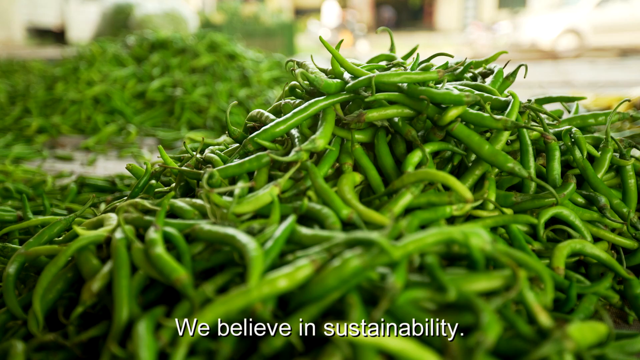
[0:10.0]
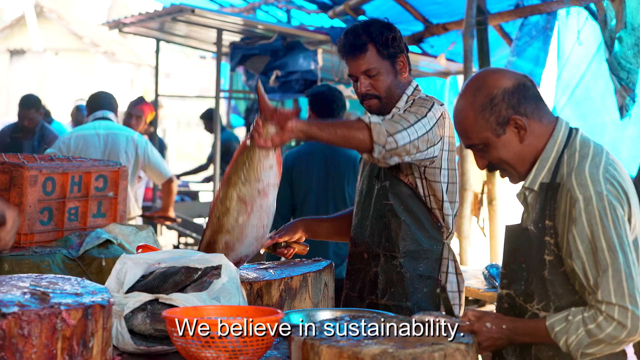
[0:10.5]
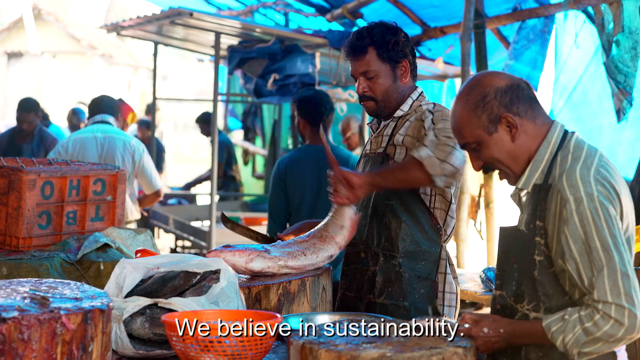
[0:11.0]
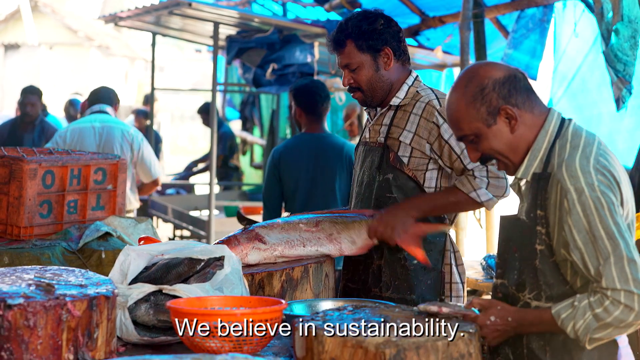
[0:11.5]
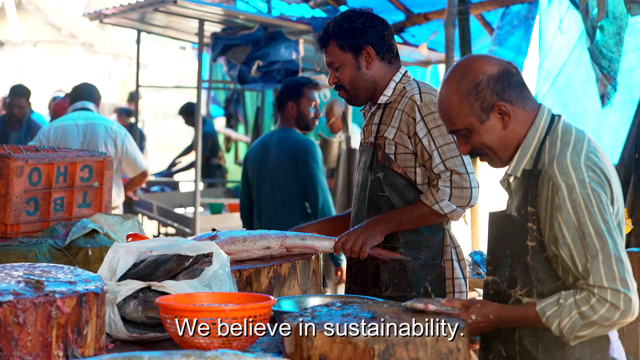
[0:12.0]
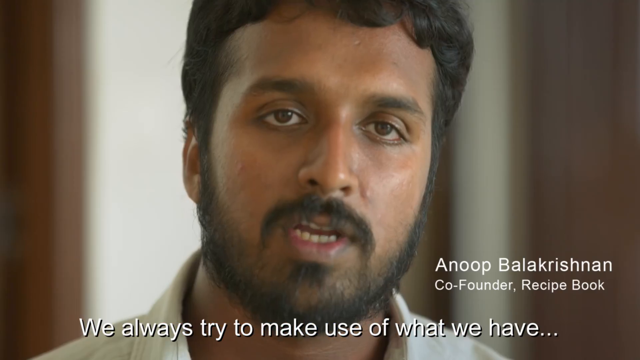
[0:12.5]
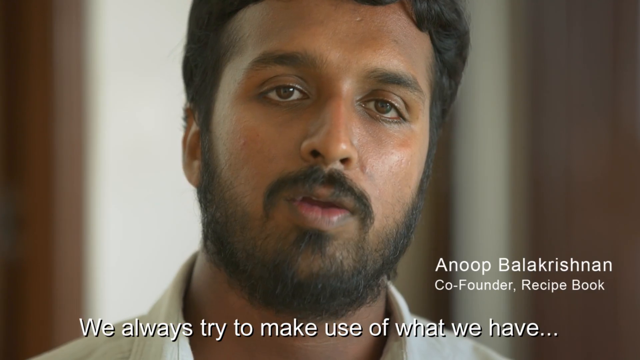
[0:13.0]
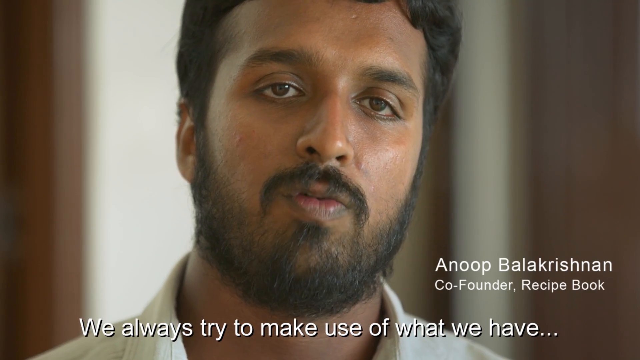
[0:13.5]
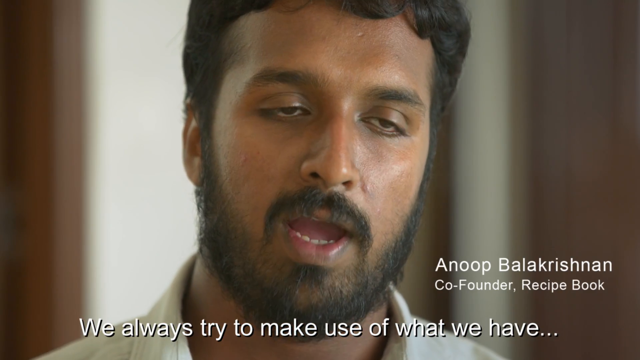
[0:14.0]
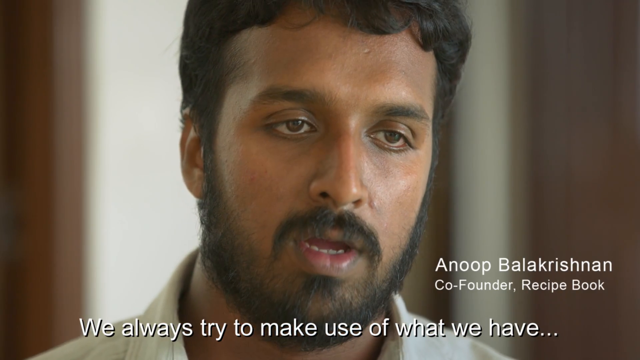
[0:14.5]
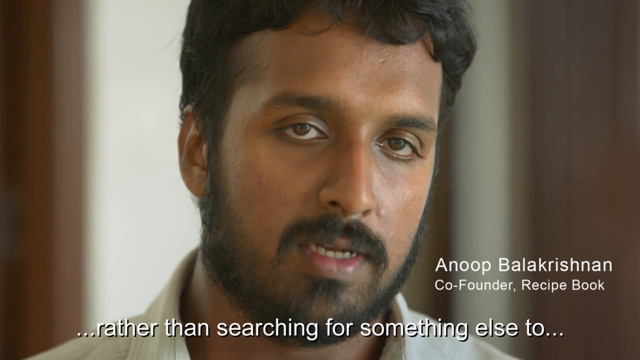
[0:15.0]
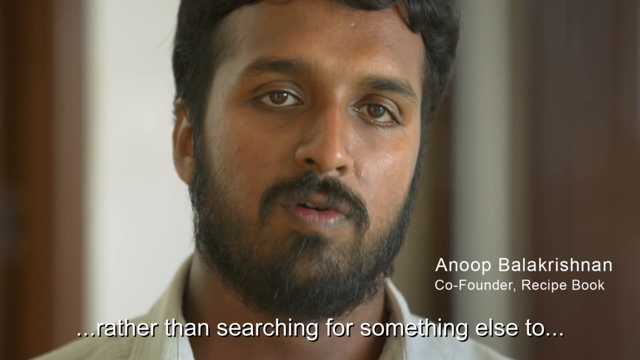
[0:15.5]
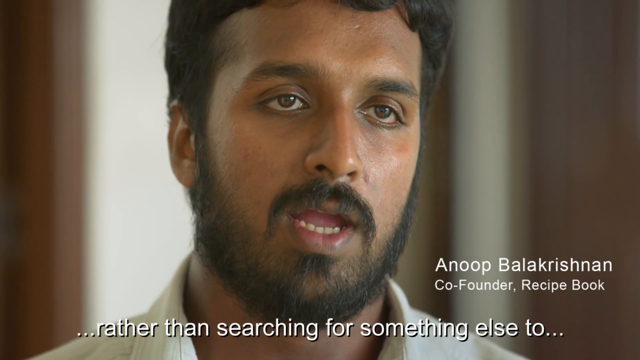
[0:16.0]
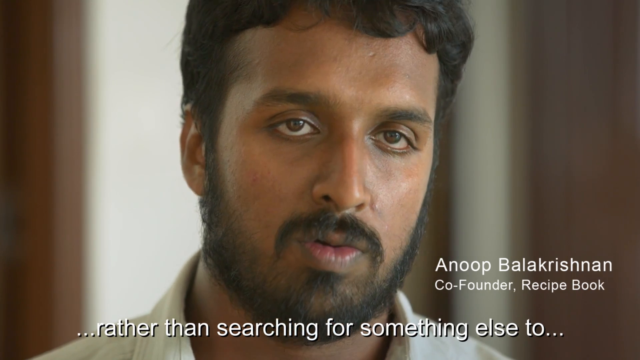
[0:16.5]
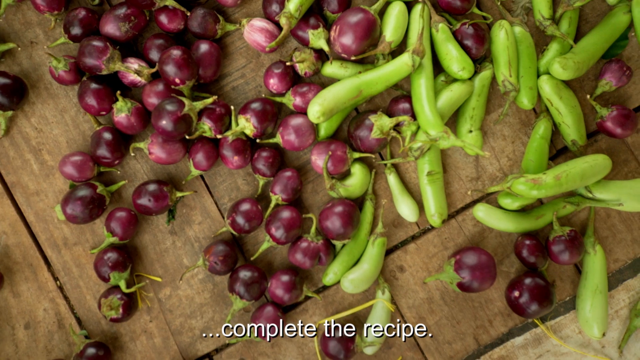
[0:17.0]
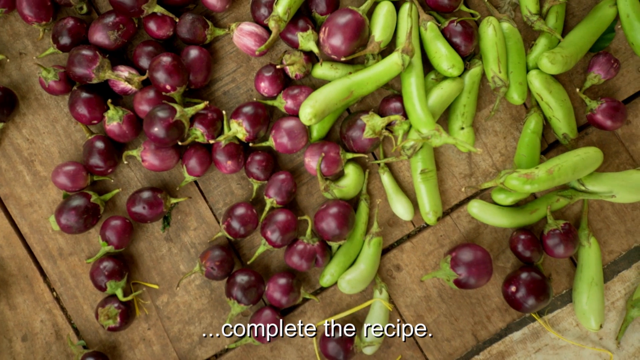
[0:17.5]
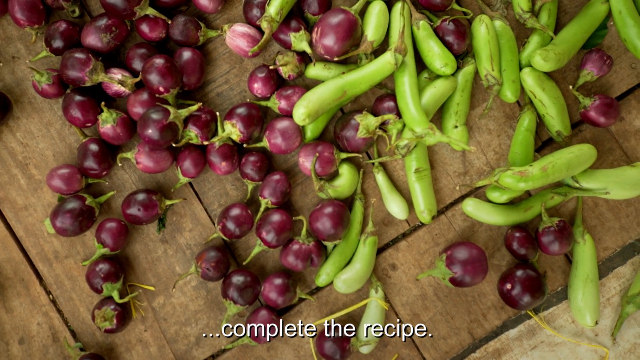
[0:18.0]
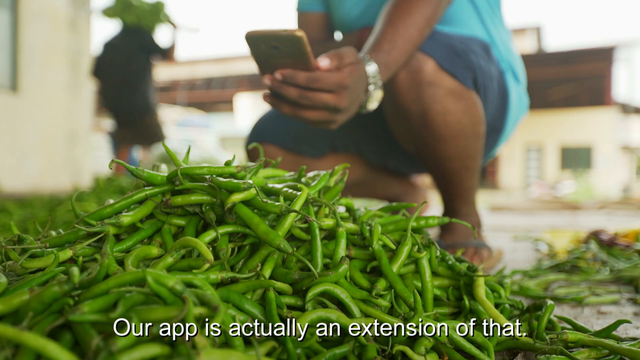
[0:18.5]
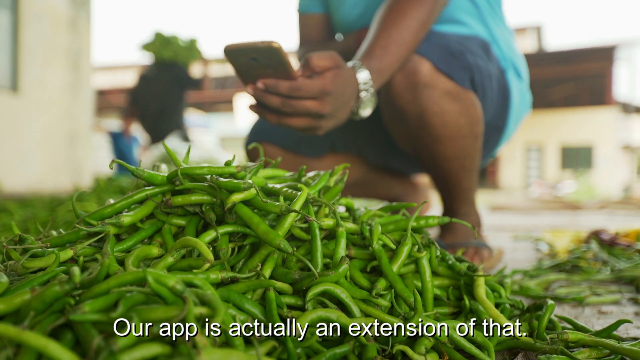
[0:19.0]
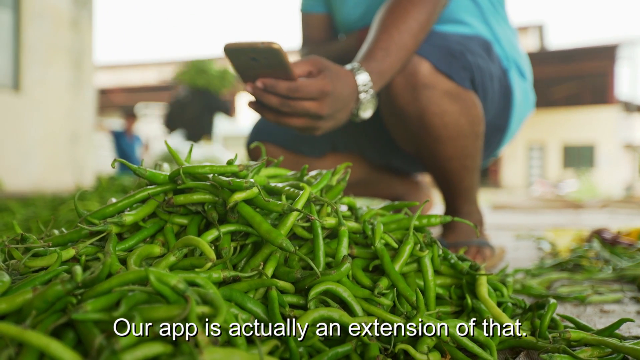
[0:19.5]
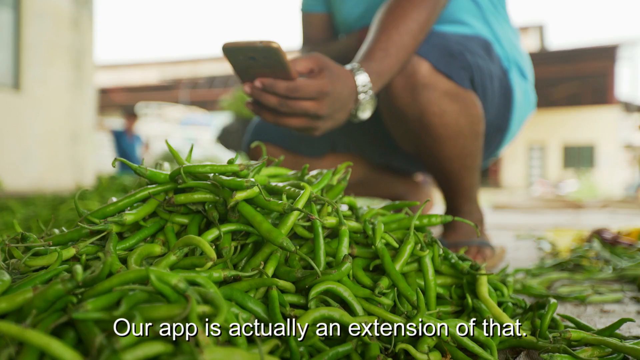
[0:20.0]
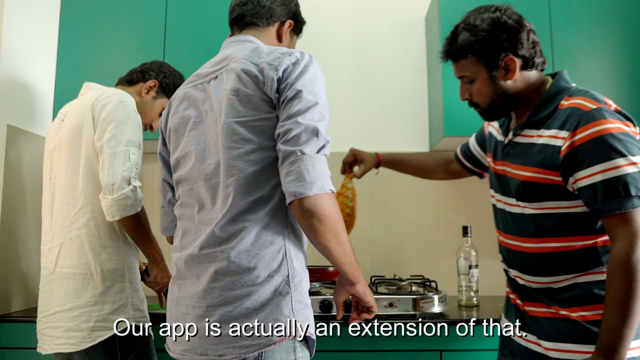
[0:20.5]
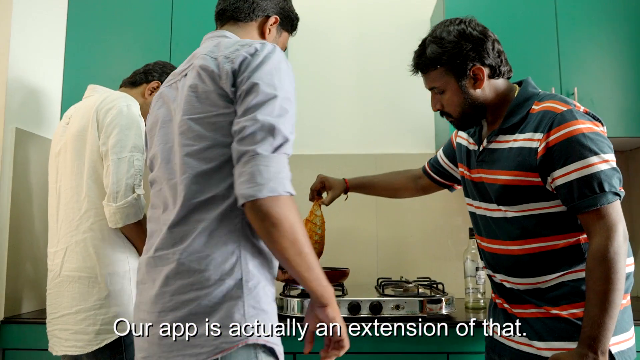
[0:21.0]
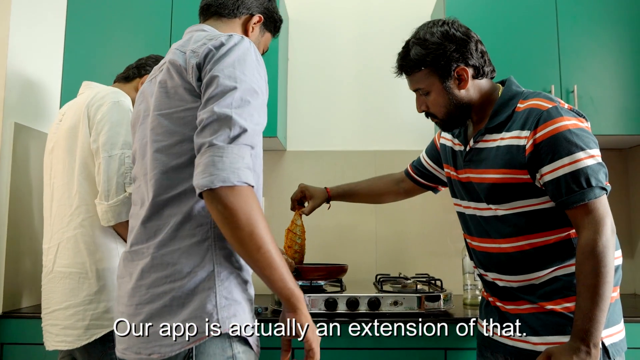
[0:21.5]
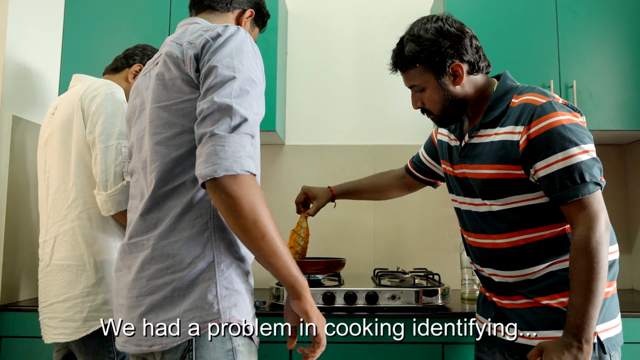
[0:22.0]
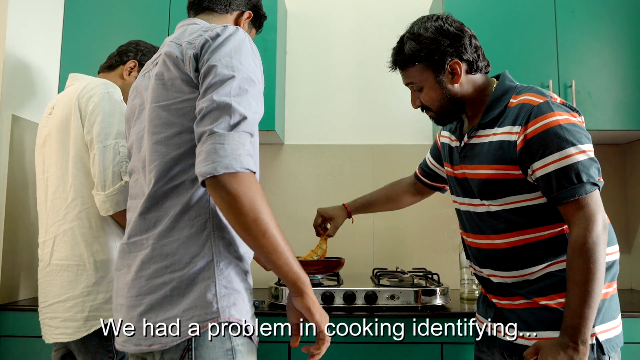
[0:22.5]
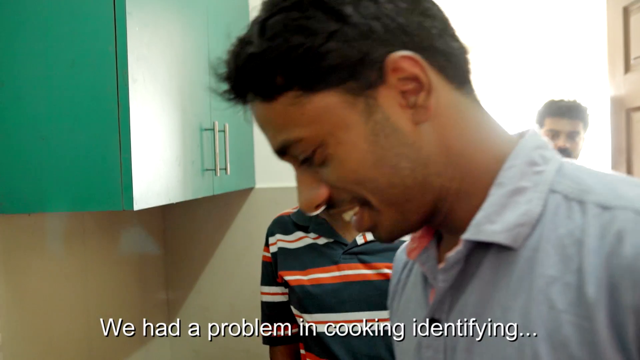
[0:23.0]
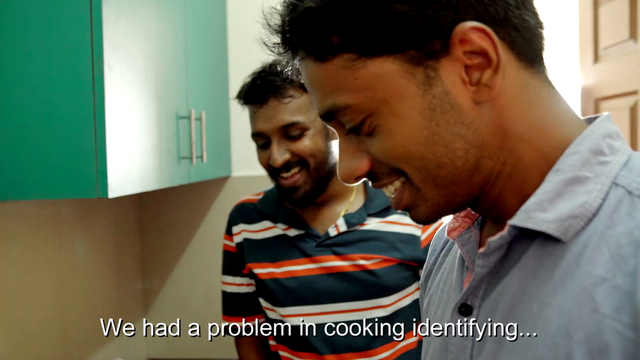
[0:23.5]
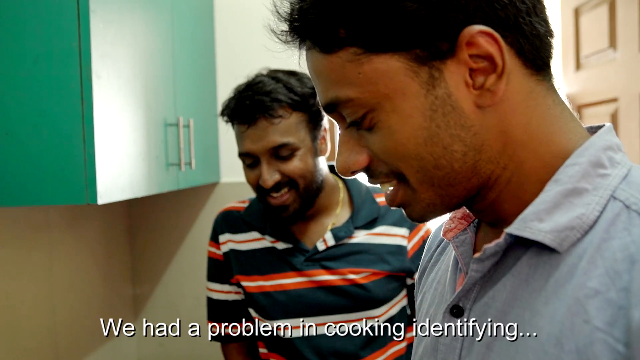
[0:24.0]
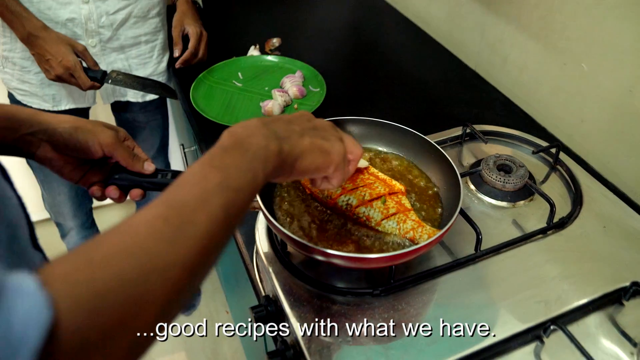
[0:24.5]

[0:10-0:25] An amount of something that looks like green beans is shown, followed by someone with more fish, handling what looks like a big red snapper. Text below reads "we always try to make use of what we have." A younger gentleman with brown hazel eyes and a beard is shown talking, and his name is shown: "Anoop Balakrishnam." He is a co-founder of recipe book. Text below reads "rather than searching for something else to complete the recipe." Various things like beans appear, and then someone fries fish in a lot of oil. The camera pans back to show the cooks: a young man in a light blue shirt, and another young man in a horizontally striped shirt behind him, smiling. They are cooking and preparing the fish.